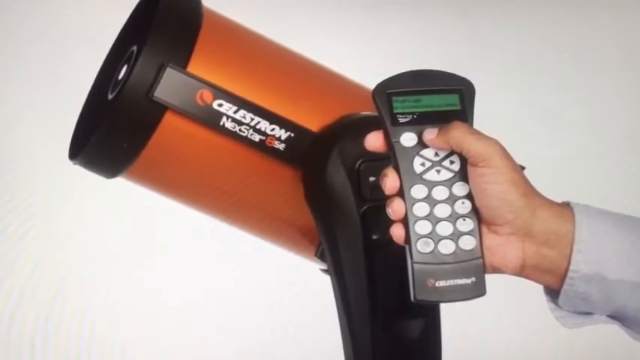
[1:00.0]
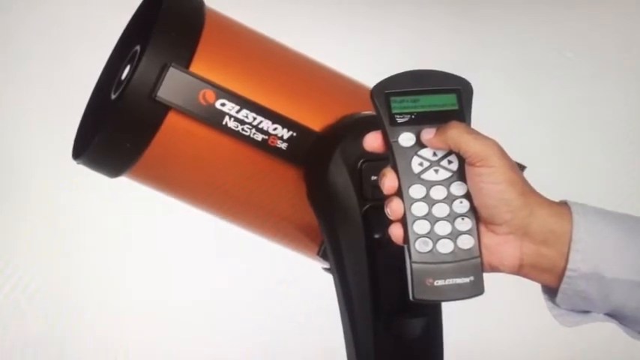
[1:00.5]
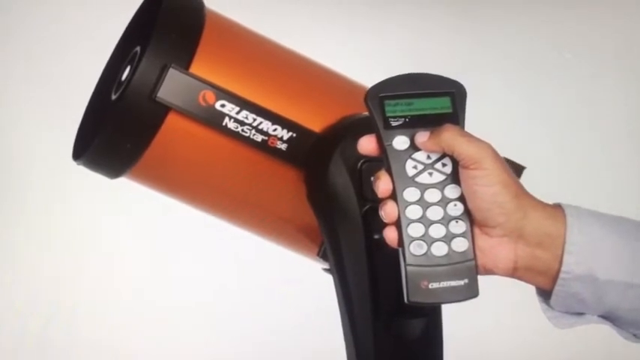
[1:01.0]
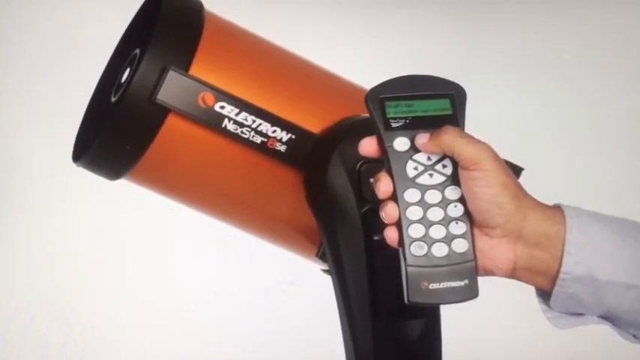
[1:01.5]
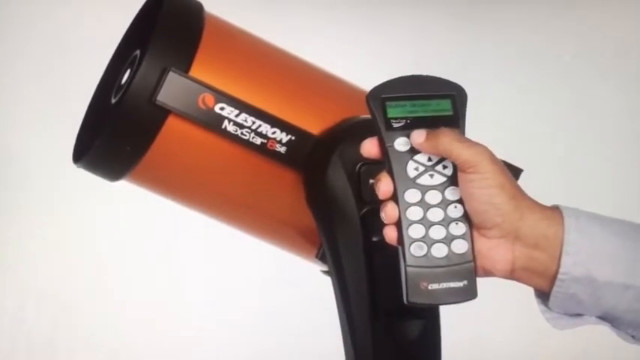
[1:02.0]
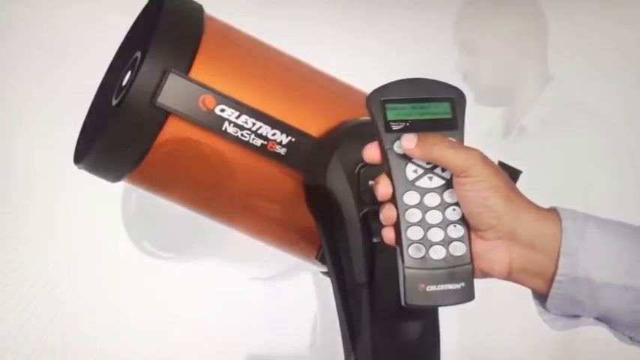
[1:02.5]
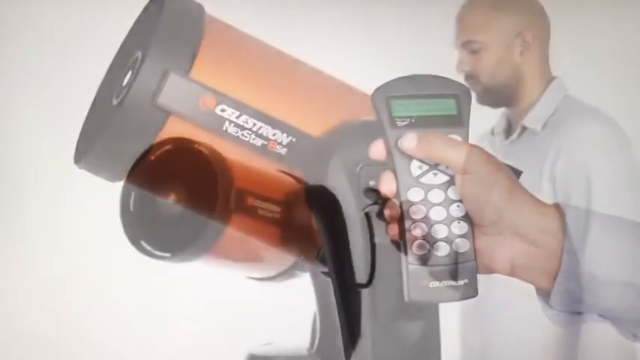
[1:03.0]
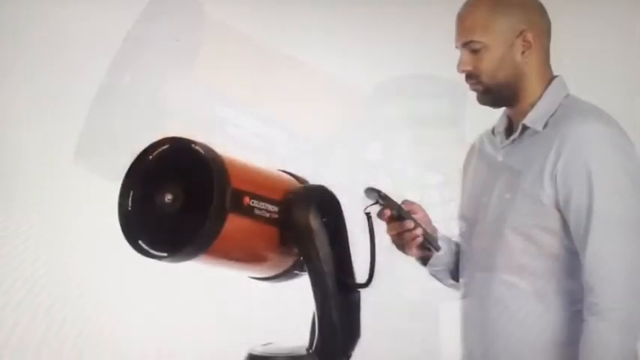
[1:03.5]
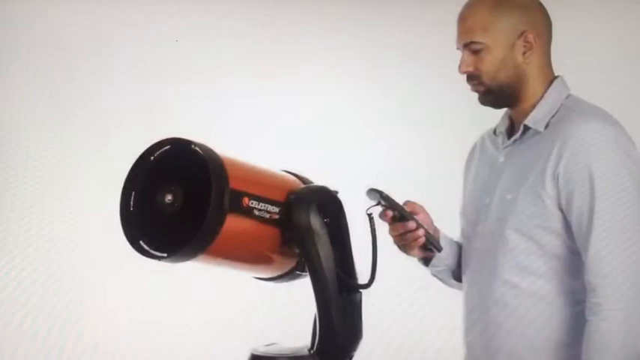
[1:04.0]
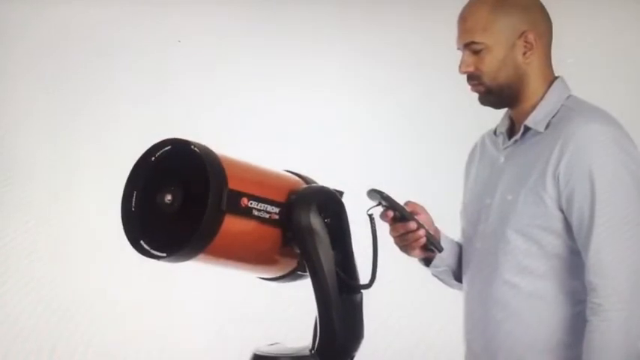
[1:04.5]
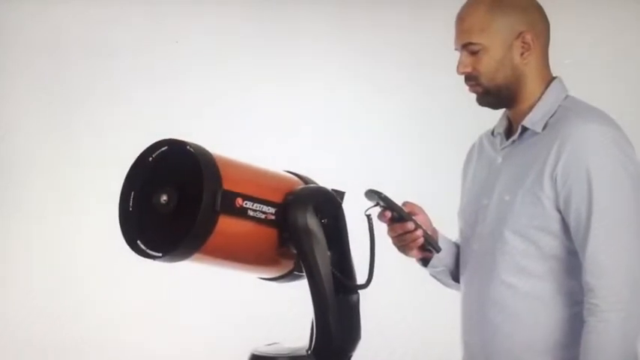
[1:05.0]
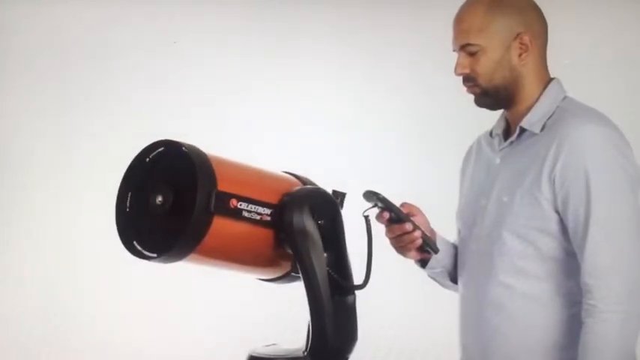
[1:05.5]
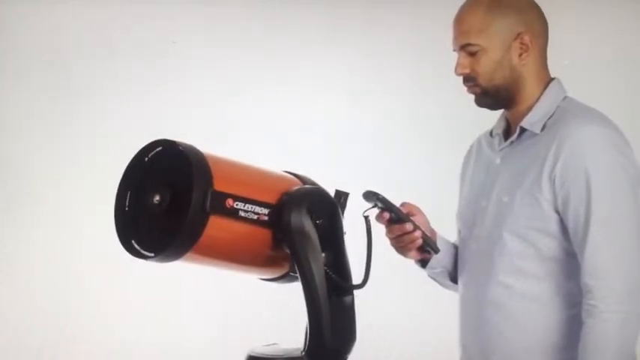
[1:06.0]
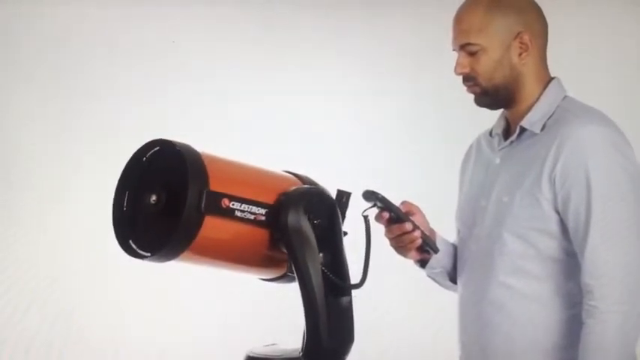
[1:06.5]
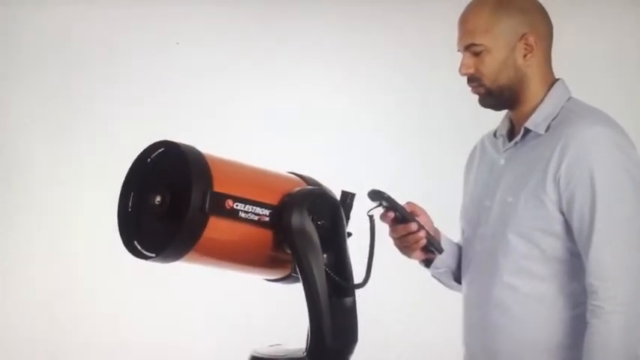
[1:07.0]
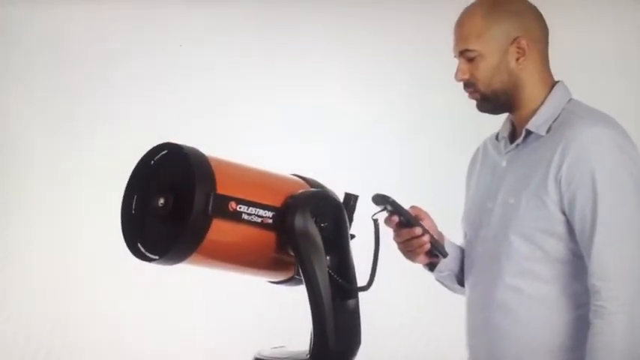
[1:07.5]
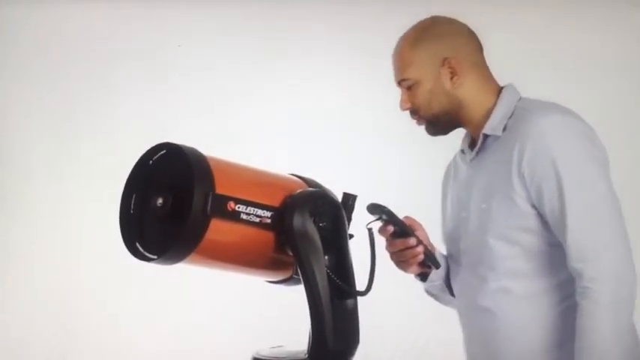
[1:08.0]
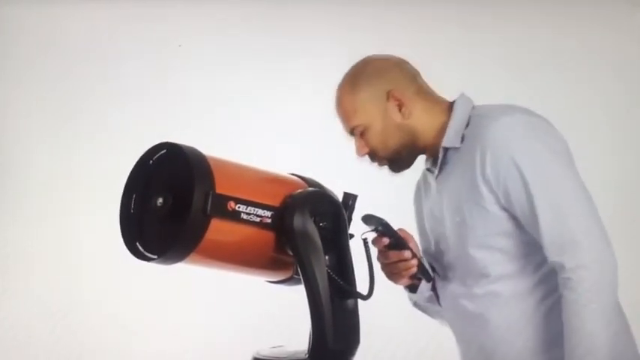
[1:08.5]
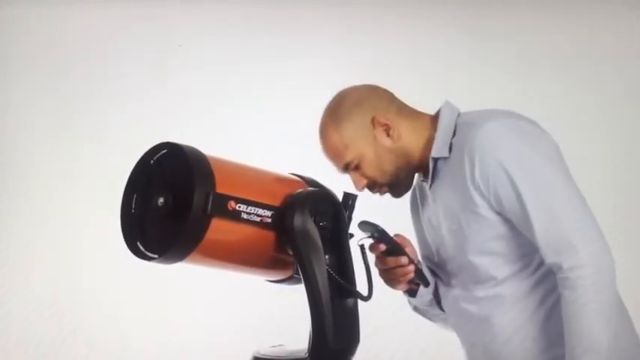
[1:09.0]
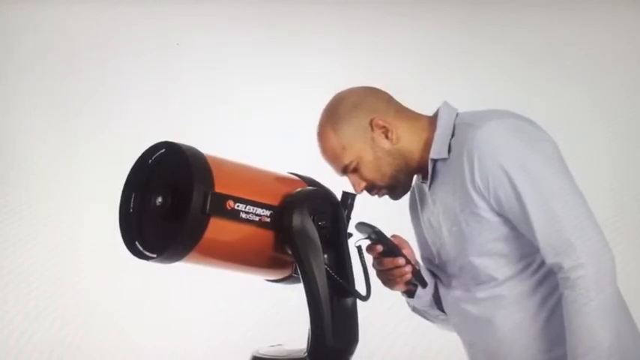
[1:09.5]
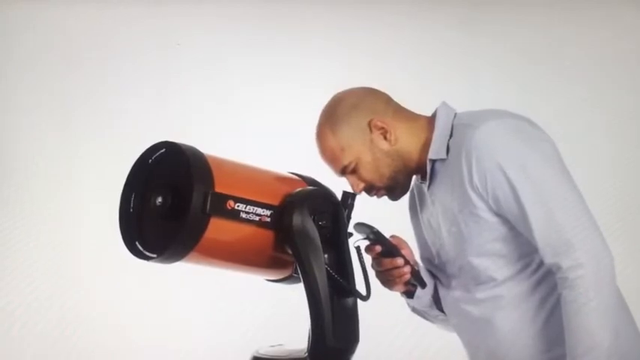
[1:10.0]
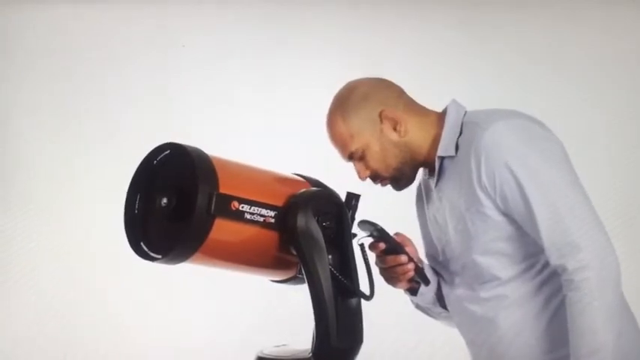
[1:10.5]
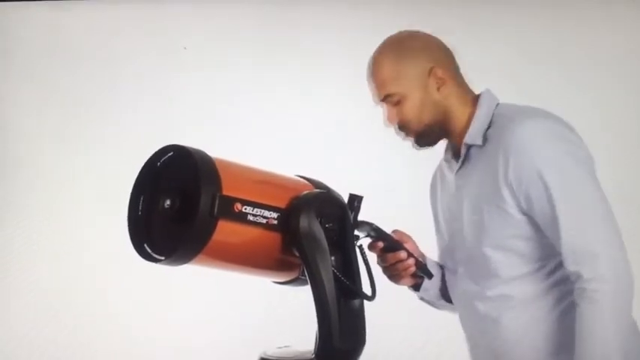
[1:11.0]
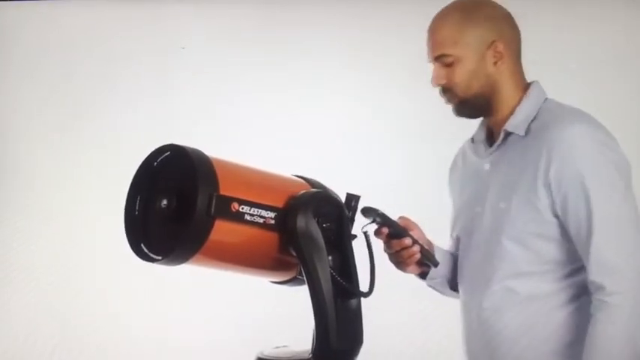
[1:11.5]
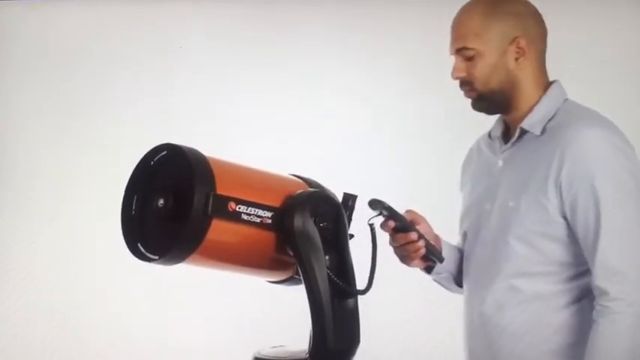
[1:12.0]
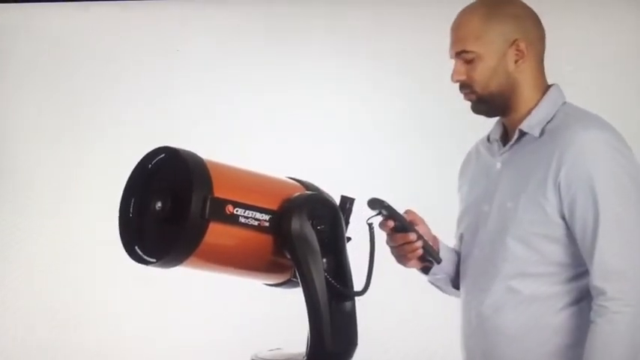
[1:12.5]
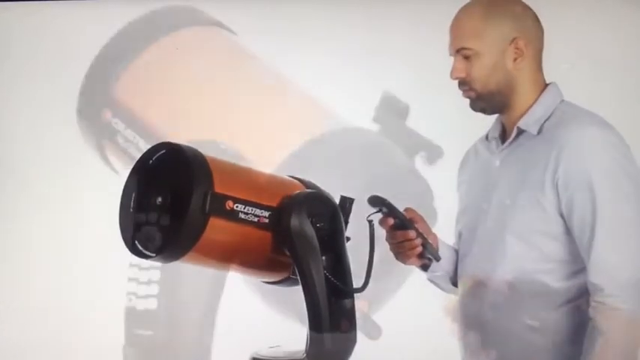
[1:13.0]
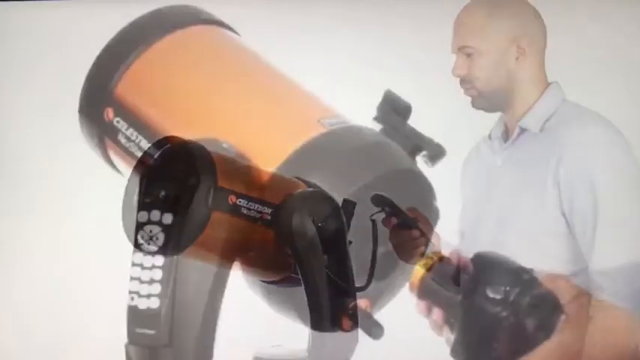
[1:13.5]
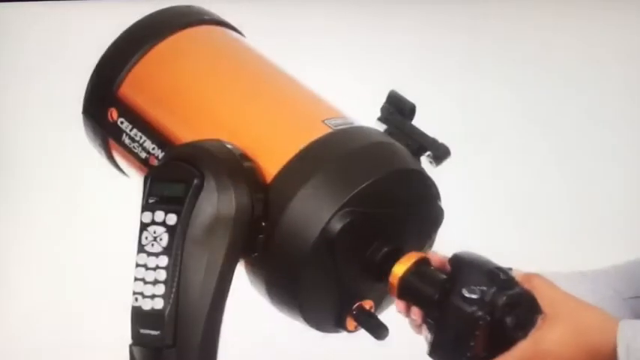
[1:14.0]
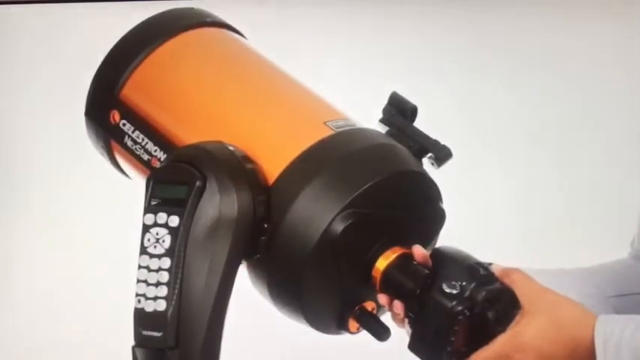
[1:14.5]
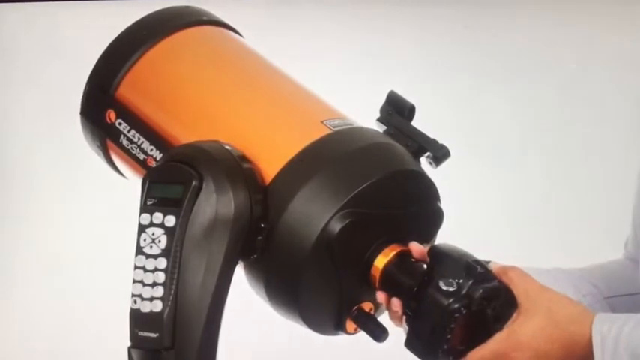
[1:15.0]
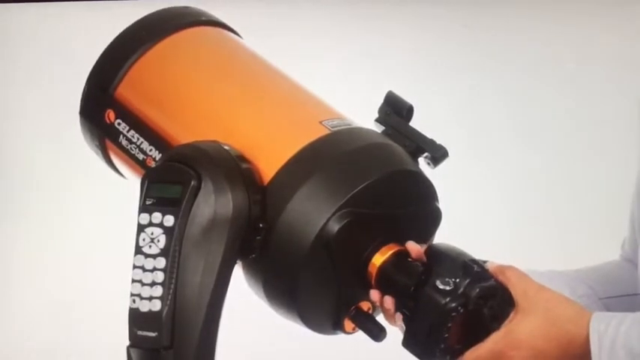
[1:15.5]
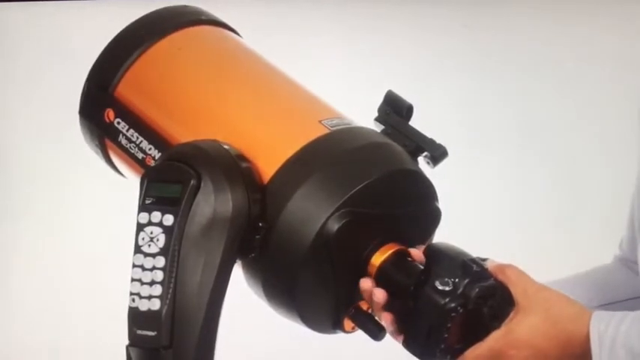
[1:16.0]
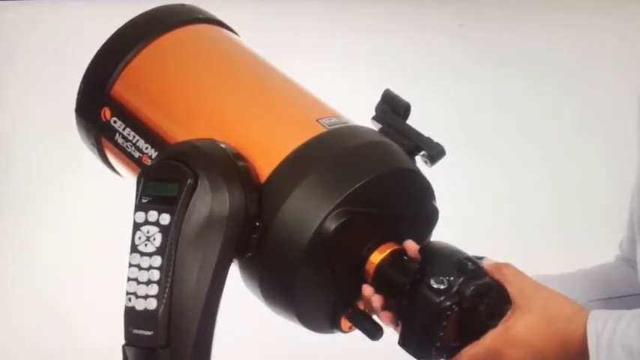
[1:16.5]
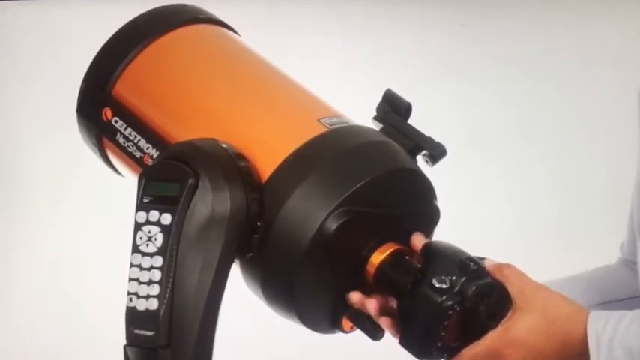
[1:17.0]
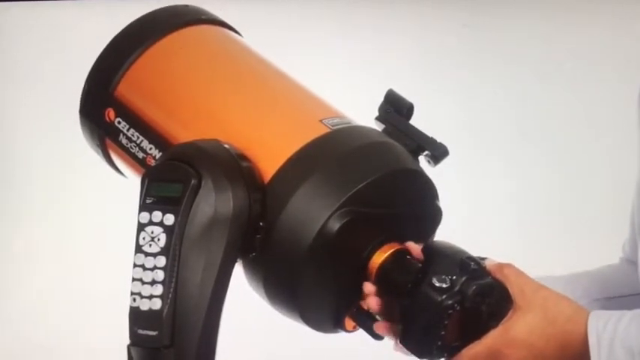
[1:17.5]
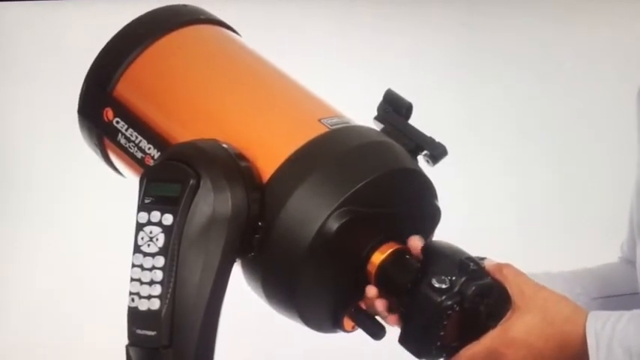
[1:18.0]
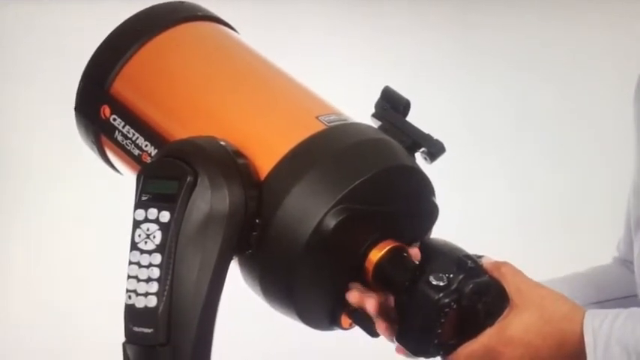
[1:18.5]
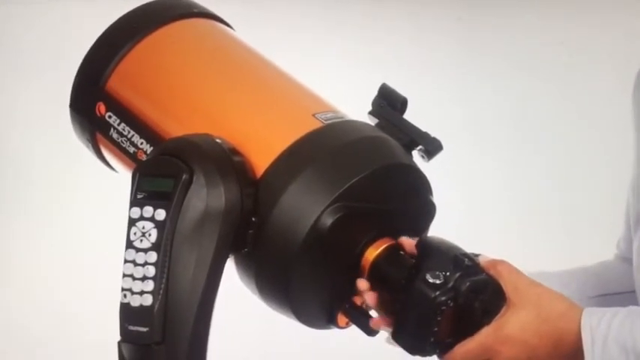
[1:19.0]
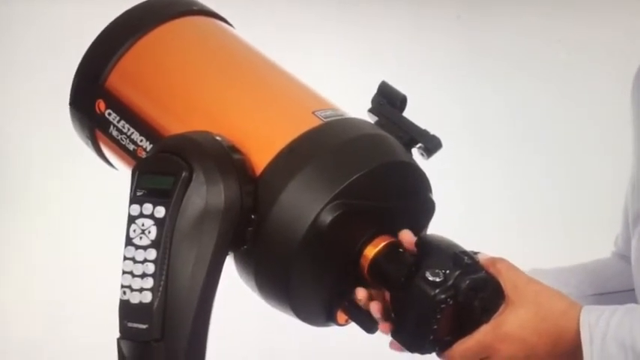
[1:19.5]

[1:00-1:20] An orange and black Celestron Nexstar has a little black object attached to it that holds what looks to be a remote. A man holds this remote, which has a bunch of white buttons and black up, down, left and right arrows; he is kind of pushing some of the buttons, and the text on the screen changes. The video then transitions to the man, who is bald, has a beard, and wears a white long-sleeve collared button shirt. He holds the remote or some kind of device connected to the Celestron, the Celestron turns, and he moves his head down toward it and then back up. He then attaches a part to the back of the Celestron, twisting it on.